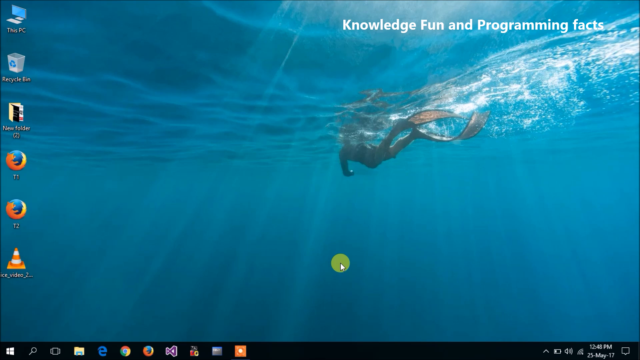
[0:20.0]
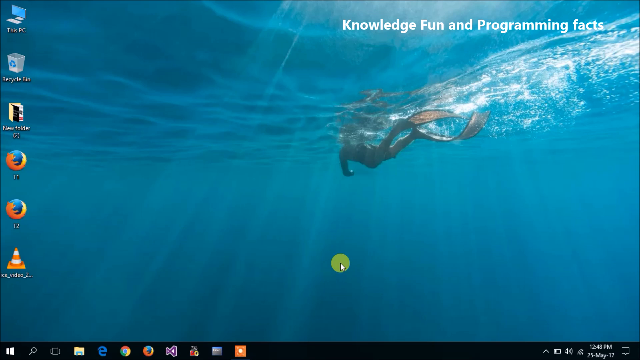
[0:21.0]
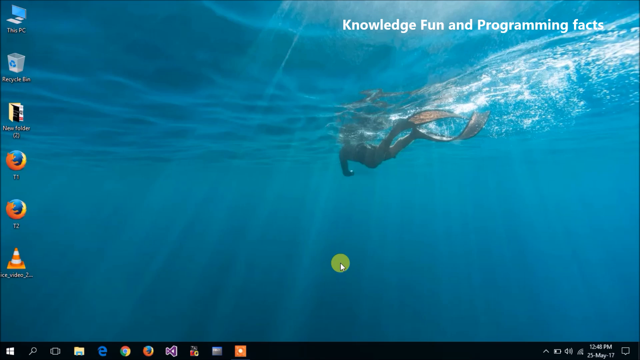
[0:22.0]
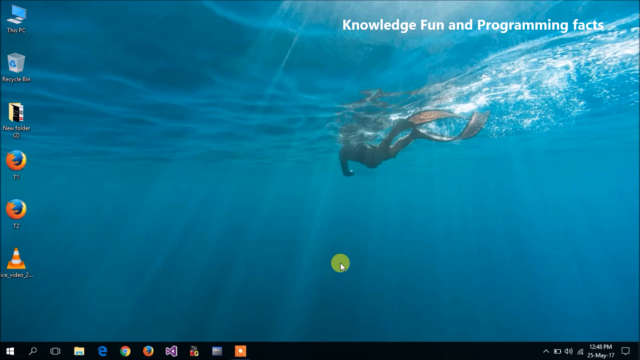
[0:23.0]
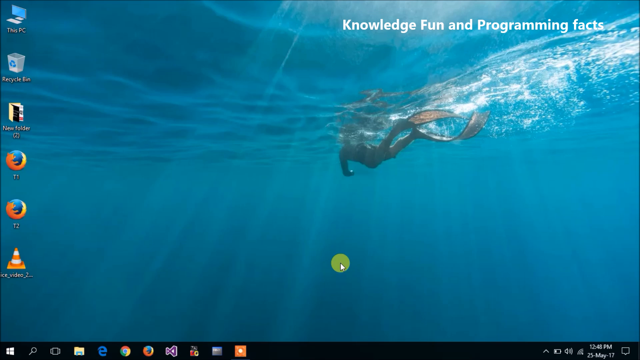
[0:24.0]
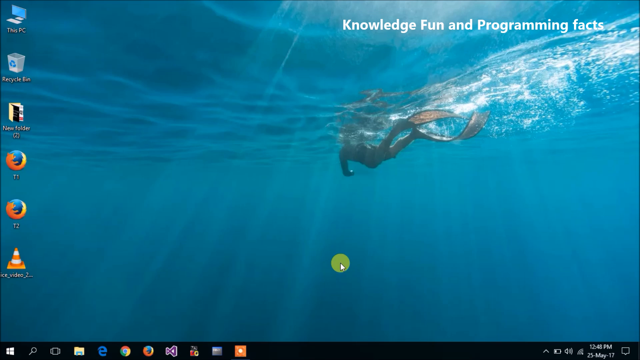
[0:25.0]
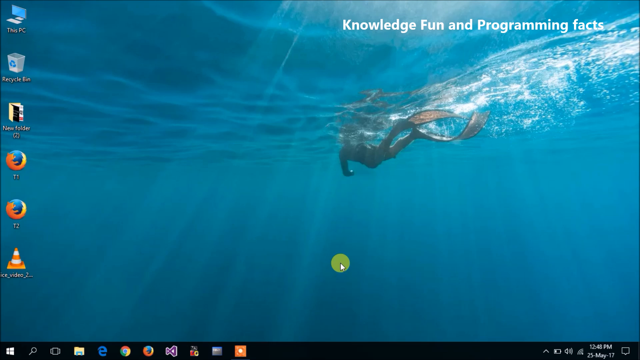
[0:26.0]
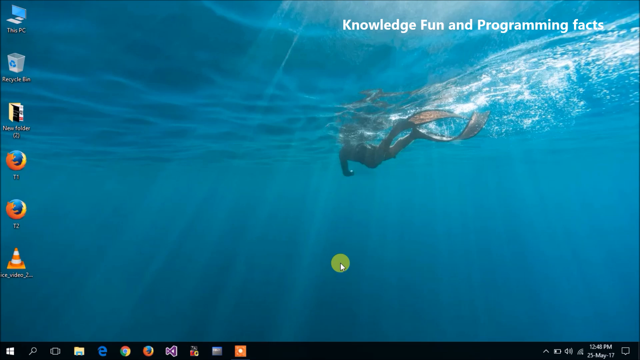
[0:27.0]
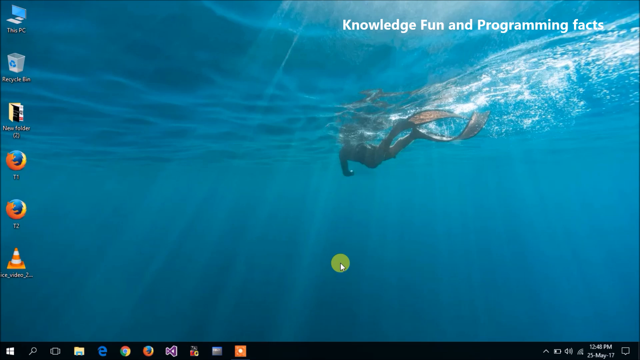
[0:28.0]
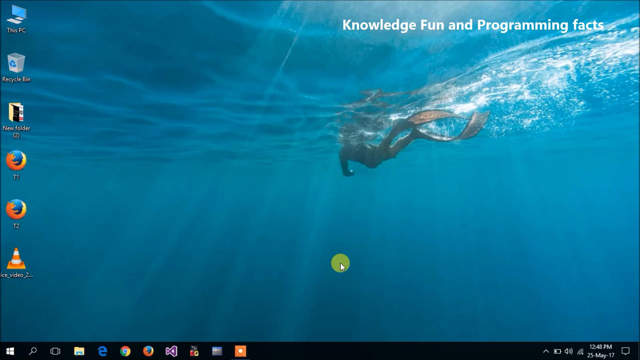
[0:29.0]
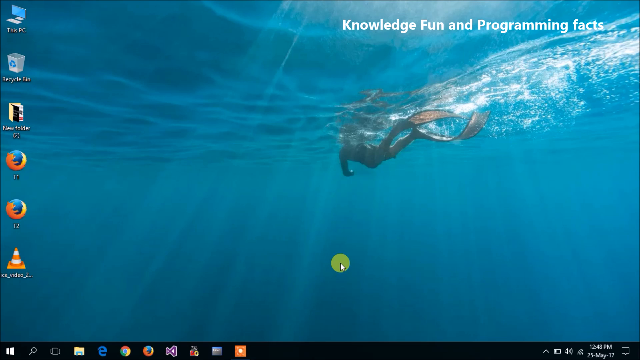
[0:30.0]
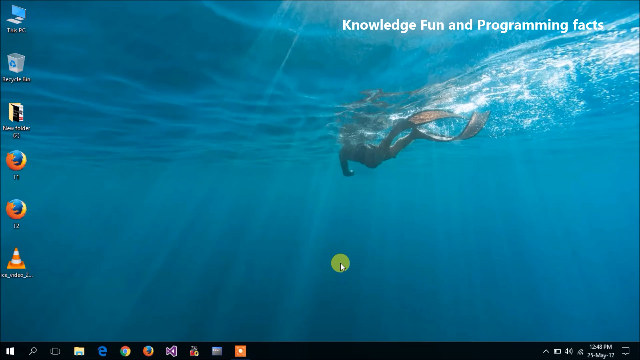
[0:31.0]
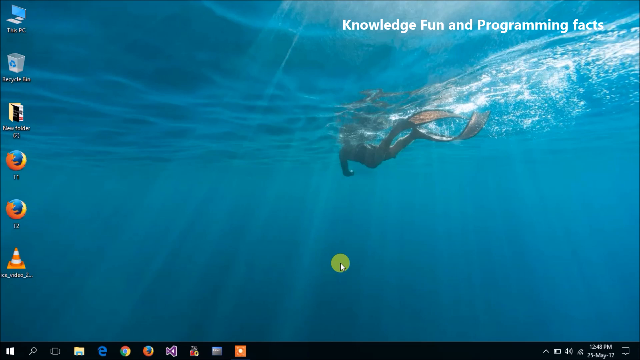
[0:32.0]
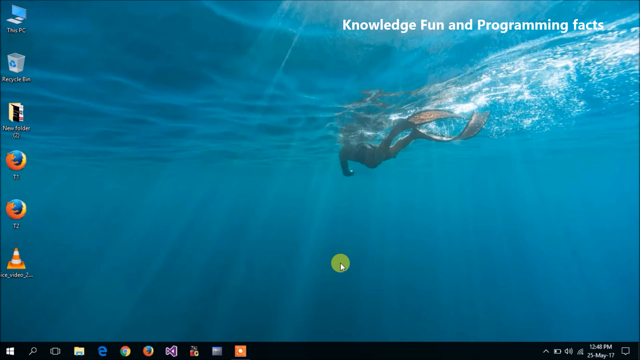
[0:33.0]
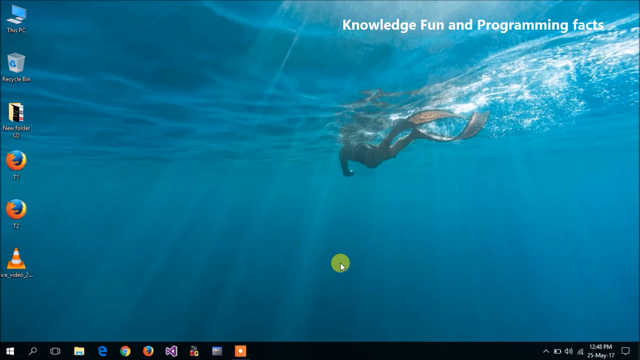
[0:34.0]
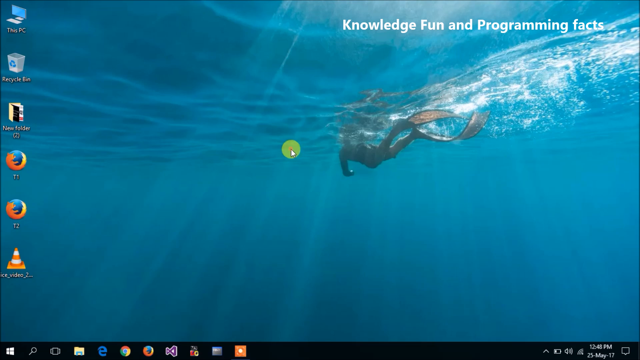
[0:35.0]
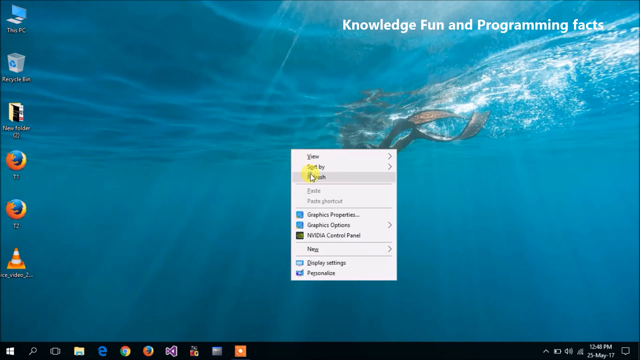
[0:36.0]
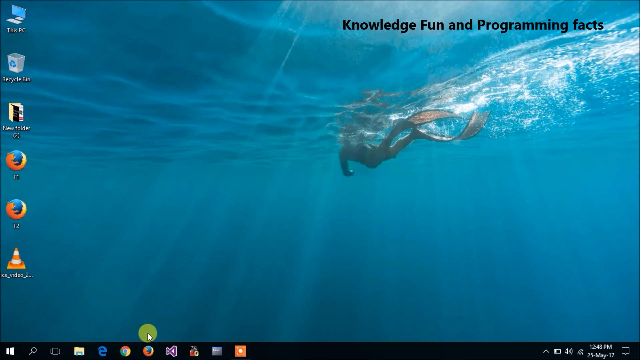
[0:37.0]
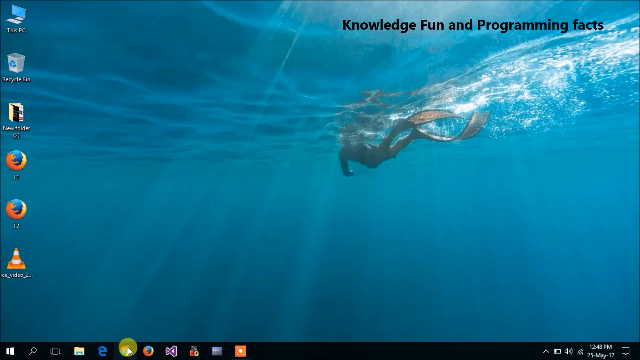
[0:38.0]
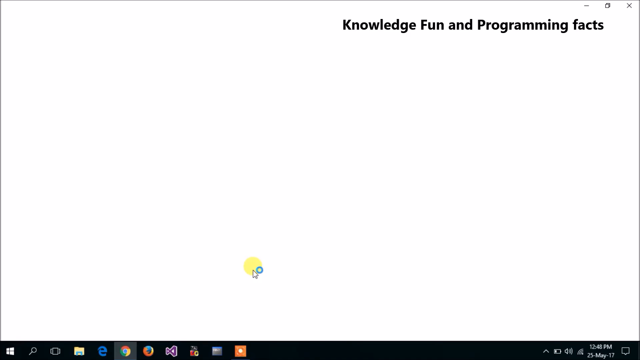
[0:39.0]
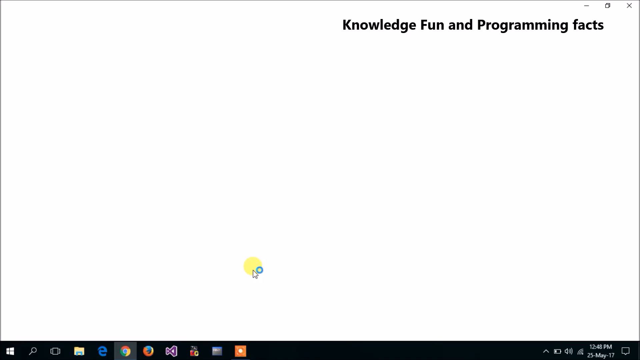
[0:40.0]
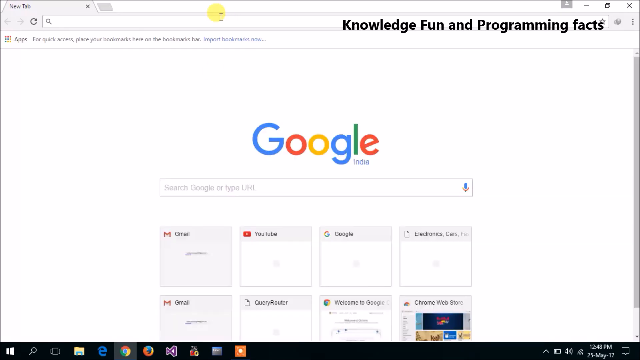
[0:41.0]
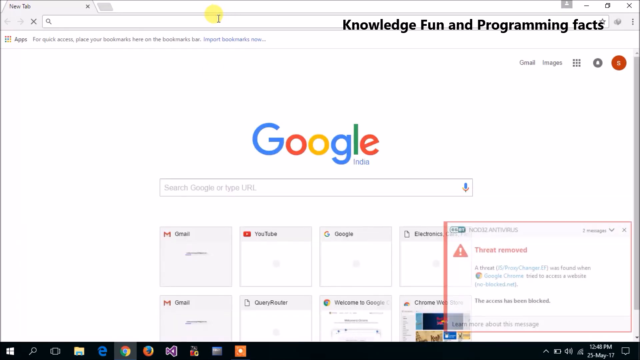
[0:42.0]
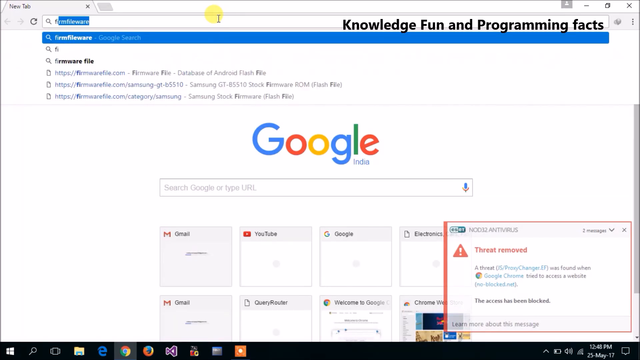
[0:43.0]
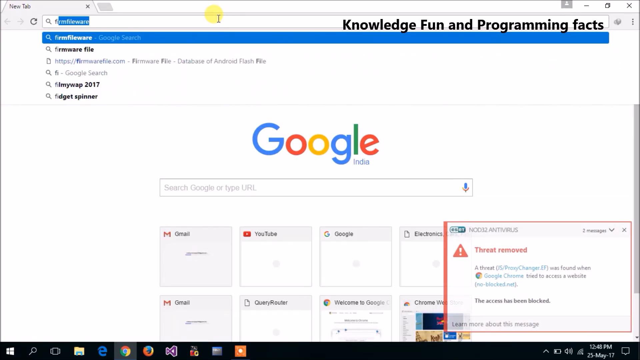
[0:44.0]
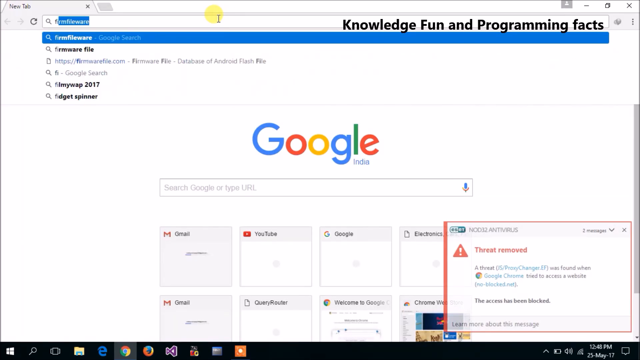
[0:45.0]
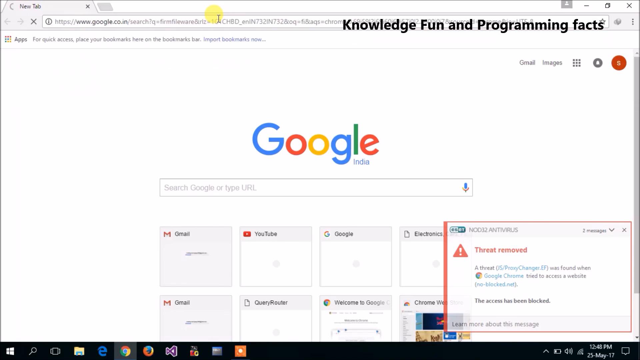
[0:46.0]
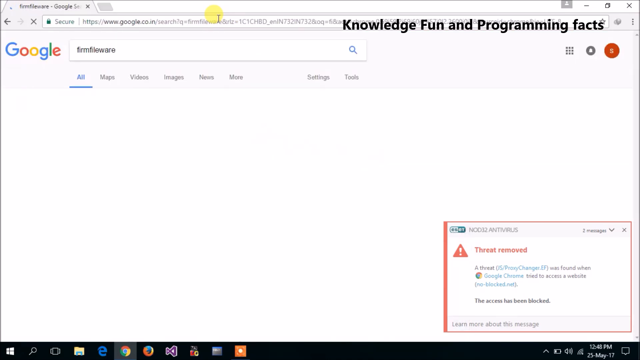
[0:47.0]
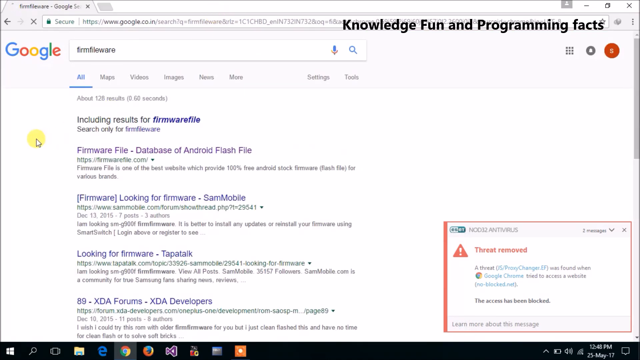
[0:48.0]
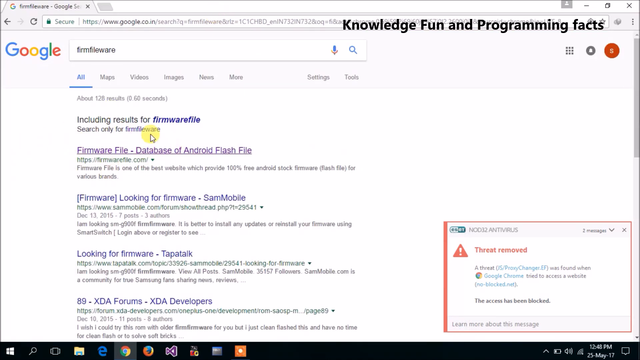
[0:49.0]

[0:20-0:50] The desktop background continues to show text, icons and the image of somebody diving into an ocean. Text on the right-hand side of the screen reads "Knowledge Fun and Programming Facts." On the left side of the screen are program icons such as PC, Recycle Bin, Files, Firefox and a Media Player. A green circle is at the bottom center of the screen with a computer cursor on top of it. The person in the ocean looks like they have just dived into the water; they have two fish fins on the two sides of their legs and seem to be swimming away from view. The video is somewhat static until the user right-clicks to bring up options on the screen, including View, Sort By, Refresh, Paste and Paste Shortcut. The menu then disappears and the screen reveals a Google page. The user types some text into the search bar, and a set of search results appears.